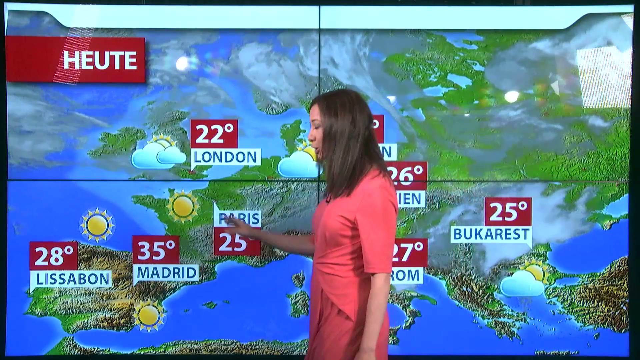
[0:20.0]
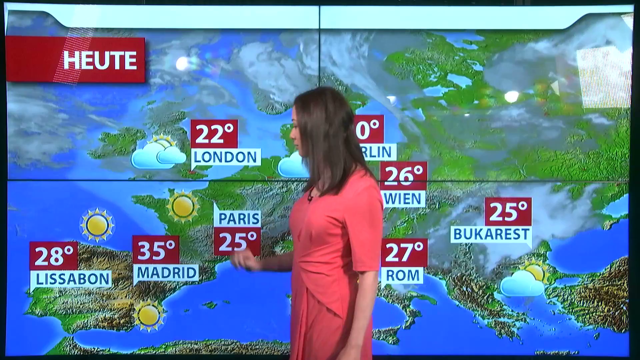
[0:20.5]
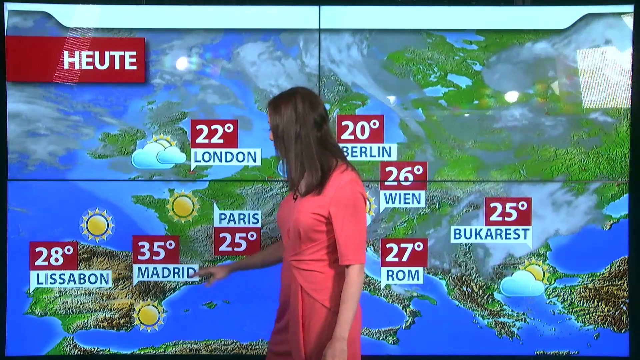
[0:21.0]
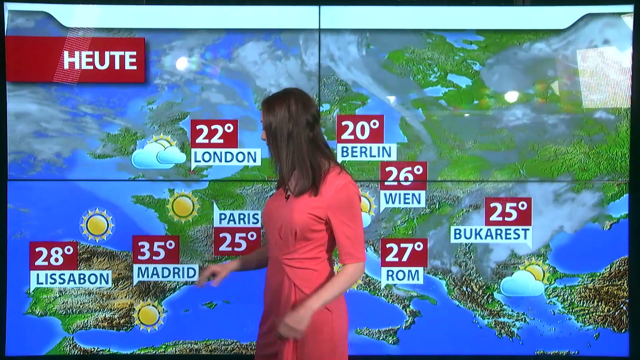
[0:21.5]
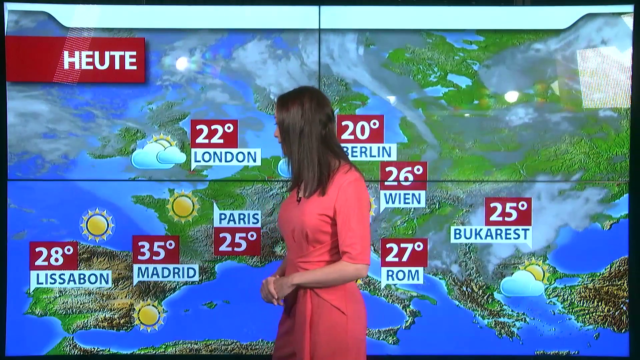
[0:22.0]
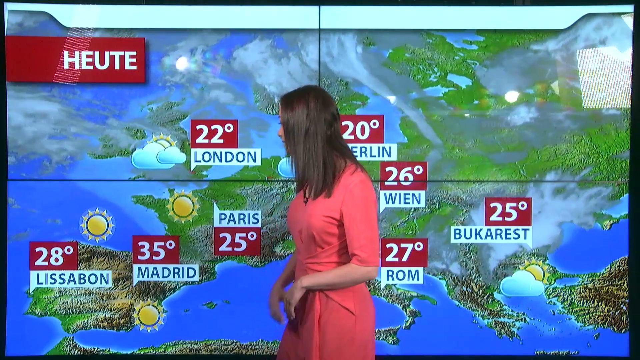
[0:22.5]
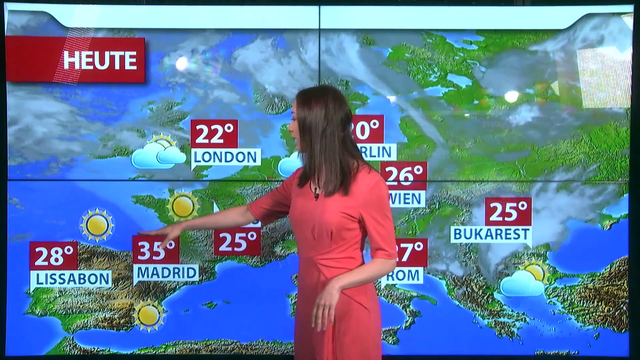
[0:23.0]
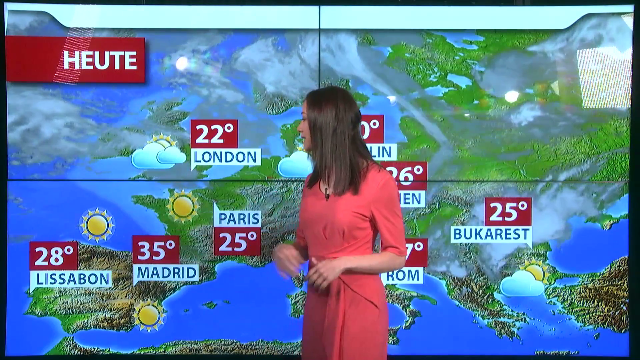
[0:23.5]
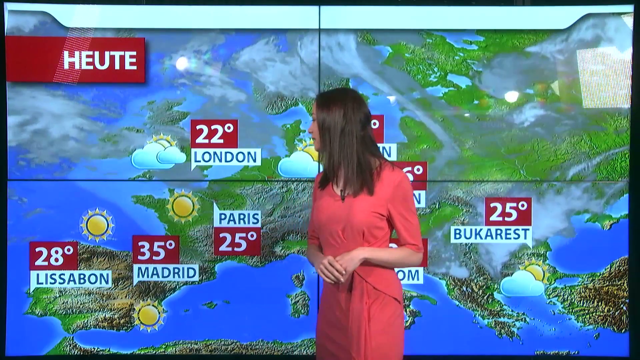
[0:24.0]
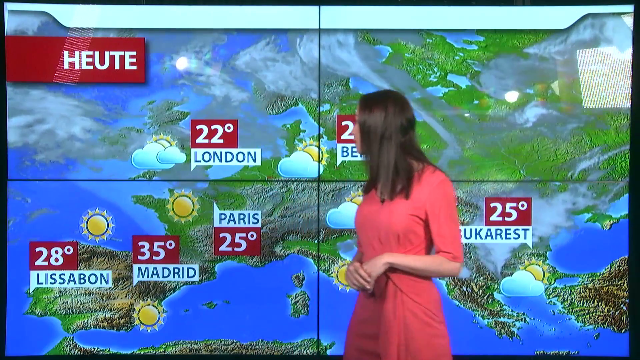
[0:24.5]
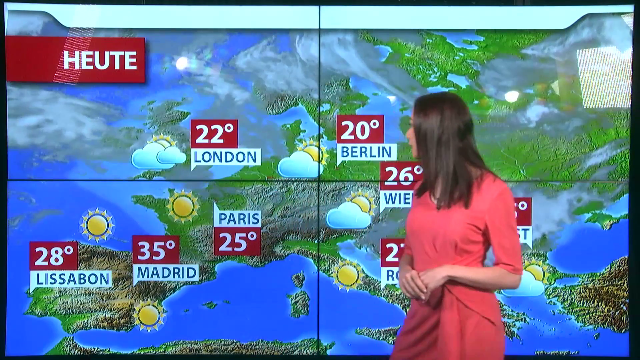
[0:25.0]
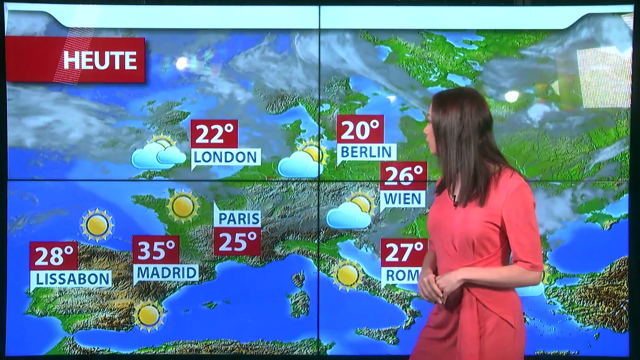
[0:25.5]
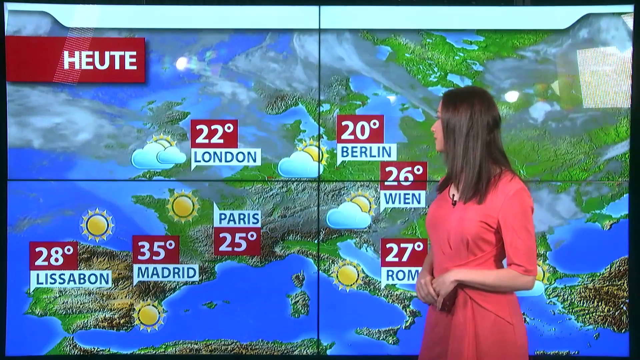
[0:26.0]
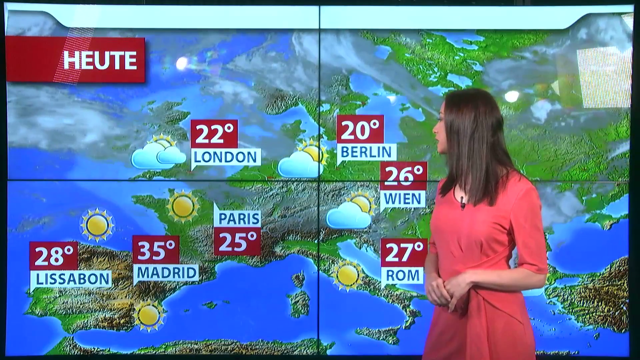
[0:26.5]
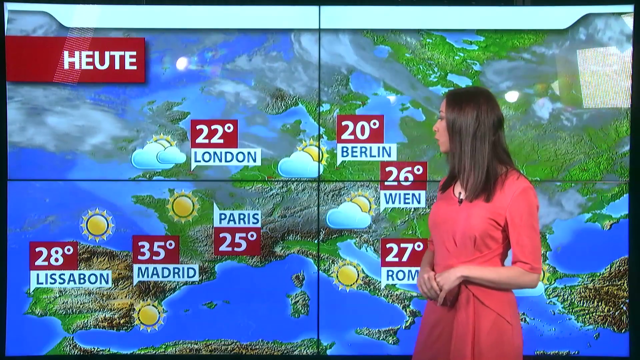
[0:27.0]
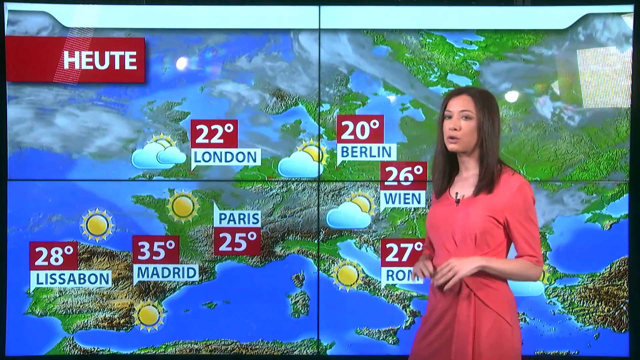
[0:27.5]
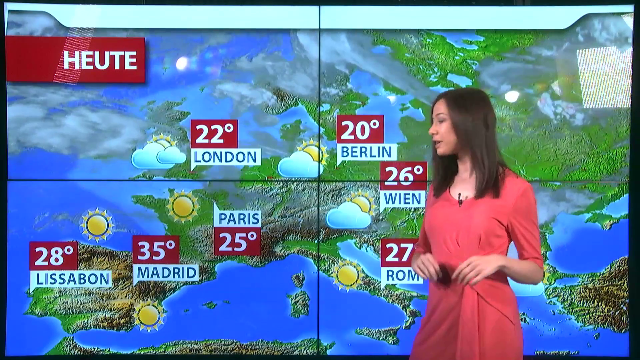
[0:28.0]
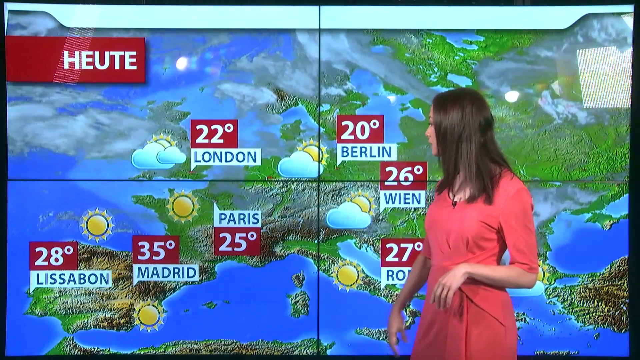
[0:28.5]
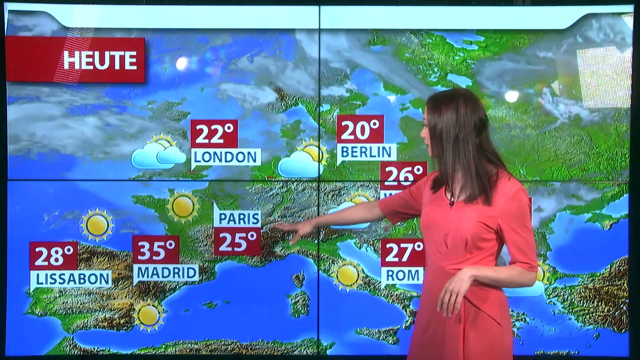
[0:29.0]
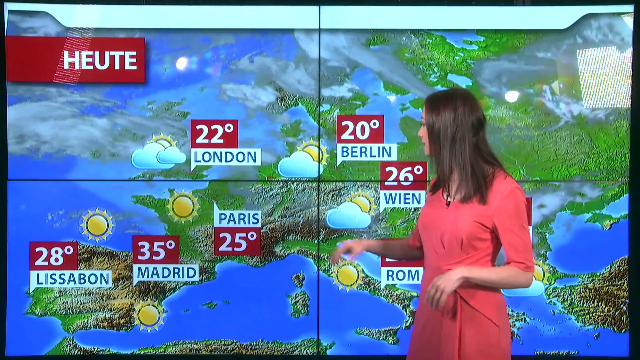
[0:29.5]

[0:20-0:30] A middle-aged woman wearing a pink dress presents the weather forecast on the screen. She faces the screen and explains with gestures of her hands, showing different places, and presents with an air of kindness. On the screen there is sunlight and there are clouds moving. London is 22 degrees and partly cloudy, Paris is 25 degrees Celsius, Madrid is 35 degrees Celsius with sunlight, and Lisbon is 28 degrees Celsius with sunlight. Berlin is 20 degrees and partly cloudy, Vienna is 26 degrees and also partly cloudy, Rome is 27 degrees with sunshine, and Beka Rest is 25 degrees Celsius. The map on the screen shows the water, the green land and the dry land.